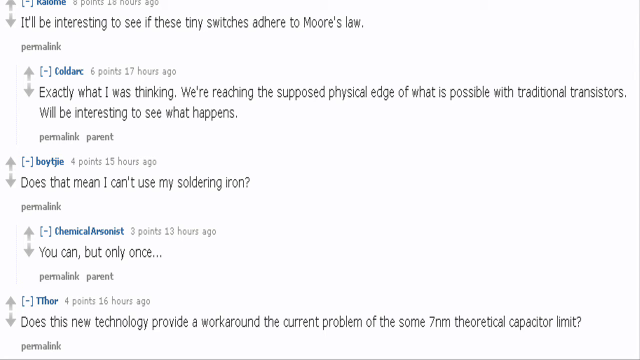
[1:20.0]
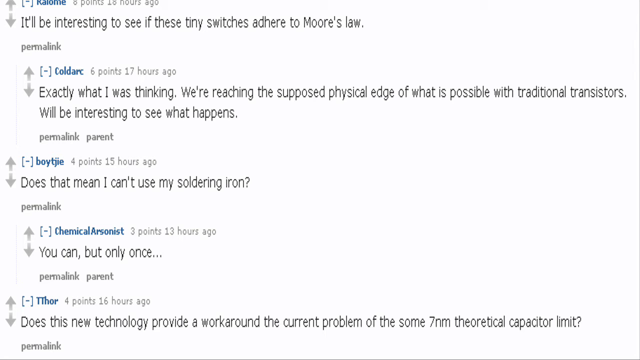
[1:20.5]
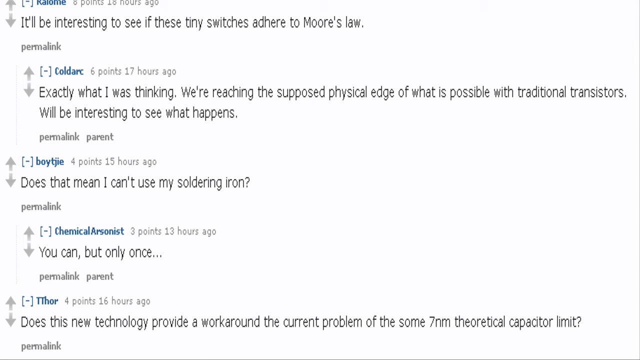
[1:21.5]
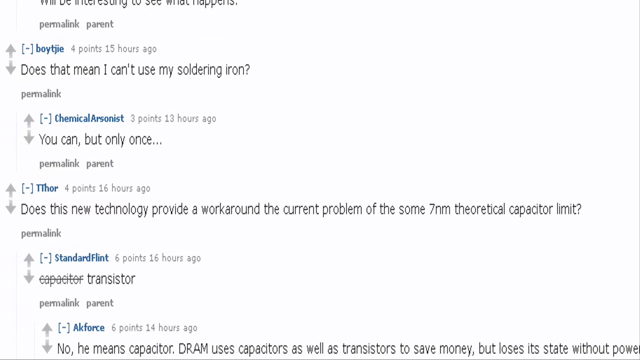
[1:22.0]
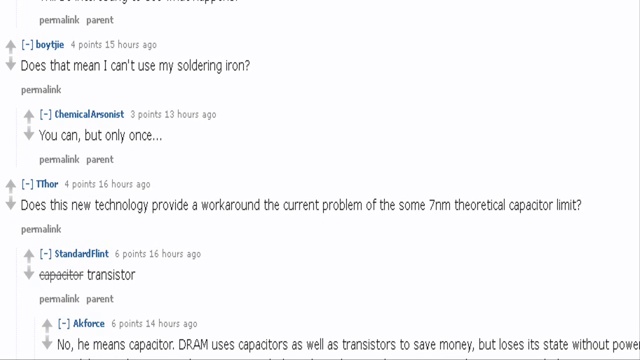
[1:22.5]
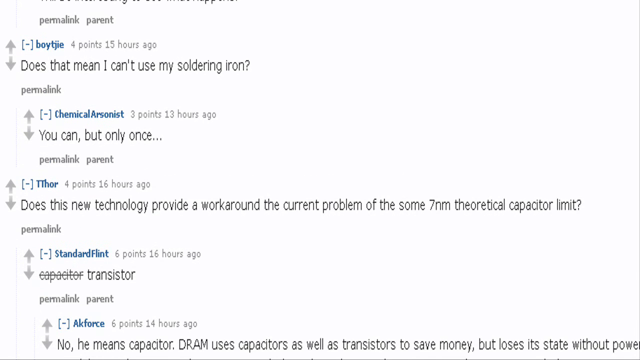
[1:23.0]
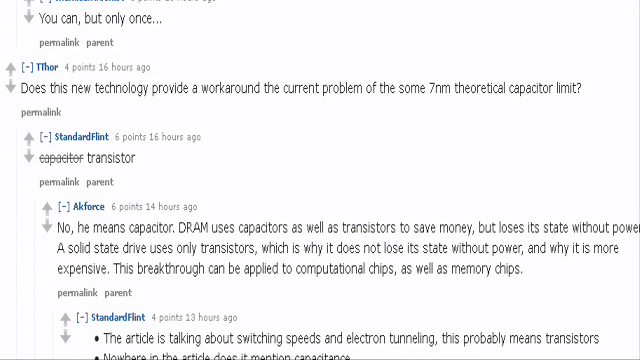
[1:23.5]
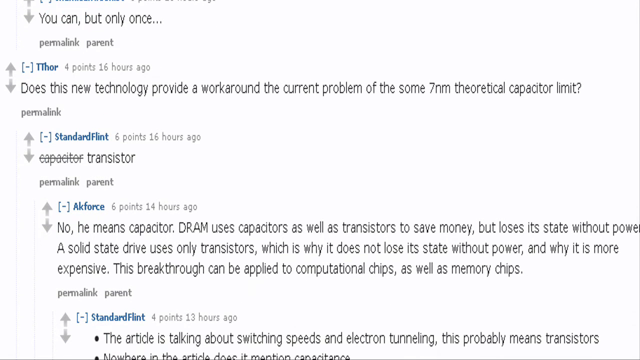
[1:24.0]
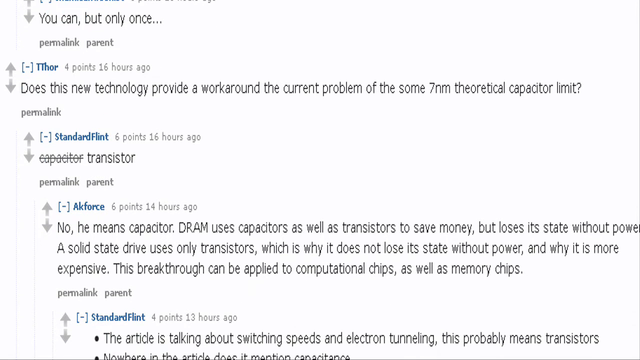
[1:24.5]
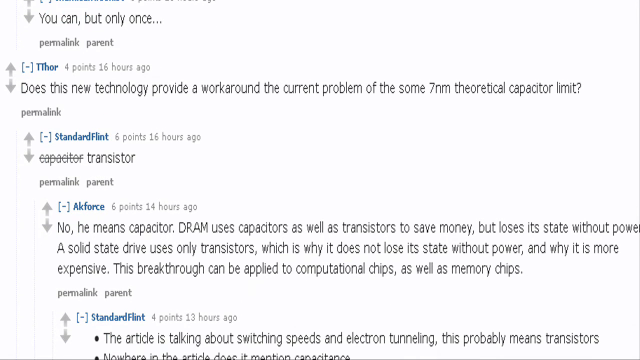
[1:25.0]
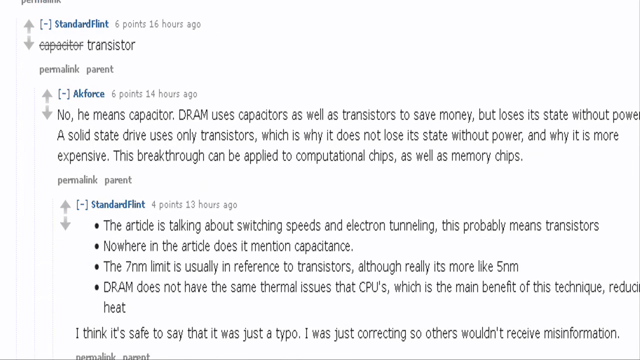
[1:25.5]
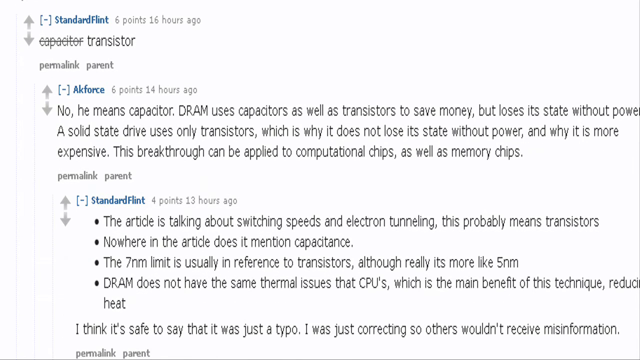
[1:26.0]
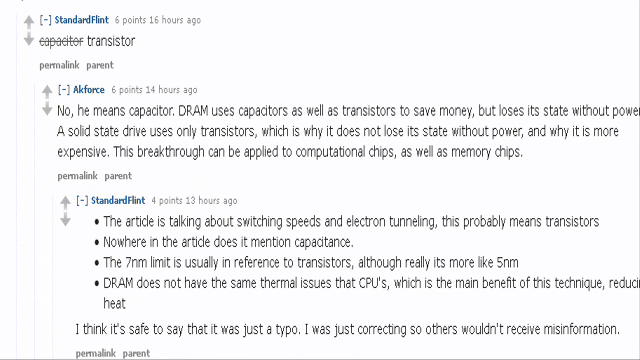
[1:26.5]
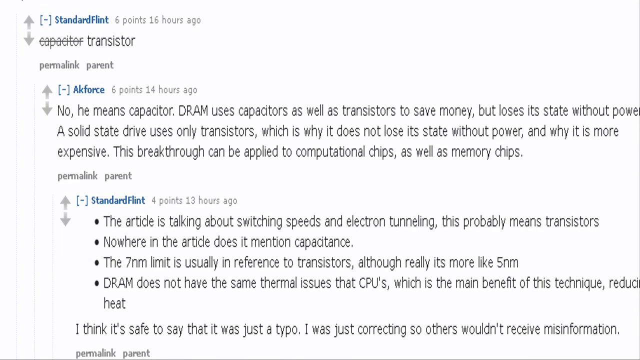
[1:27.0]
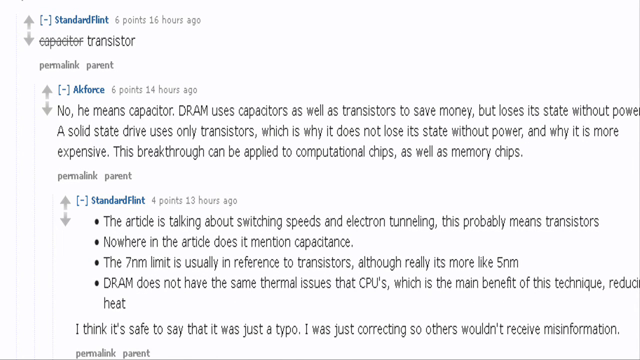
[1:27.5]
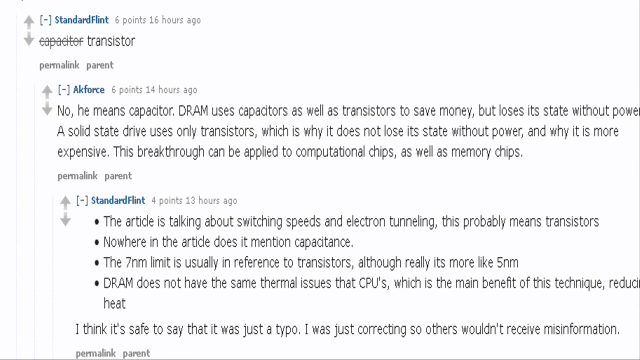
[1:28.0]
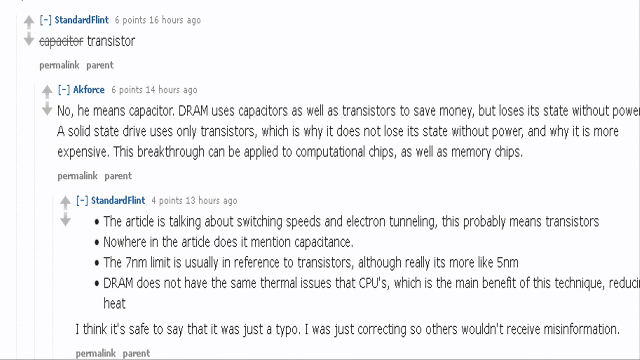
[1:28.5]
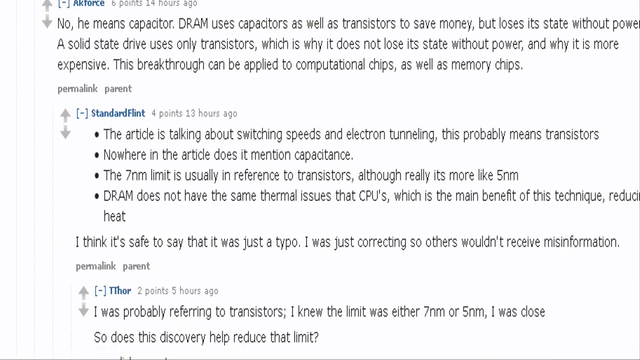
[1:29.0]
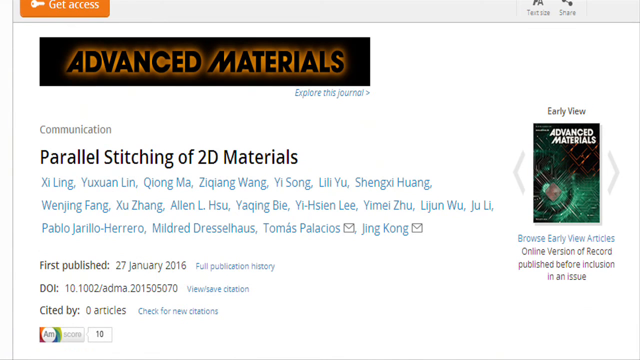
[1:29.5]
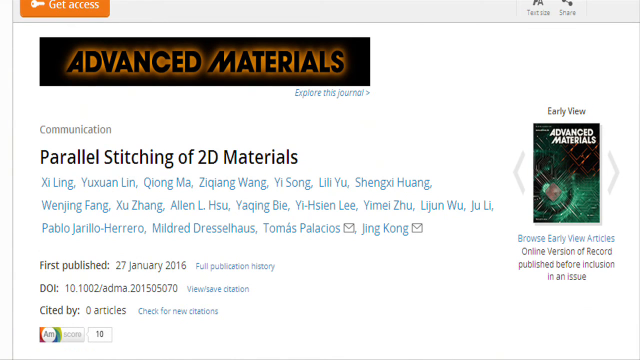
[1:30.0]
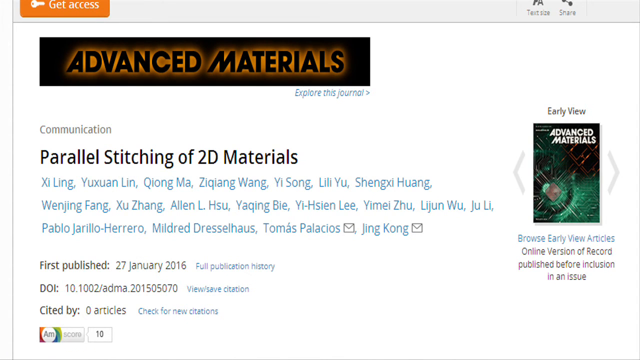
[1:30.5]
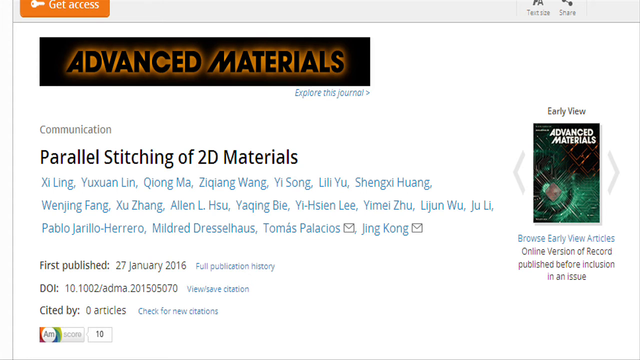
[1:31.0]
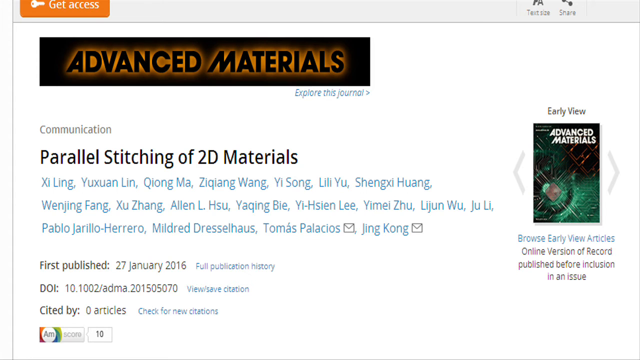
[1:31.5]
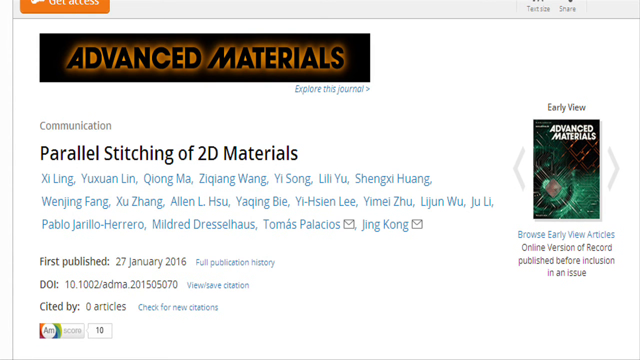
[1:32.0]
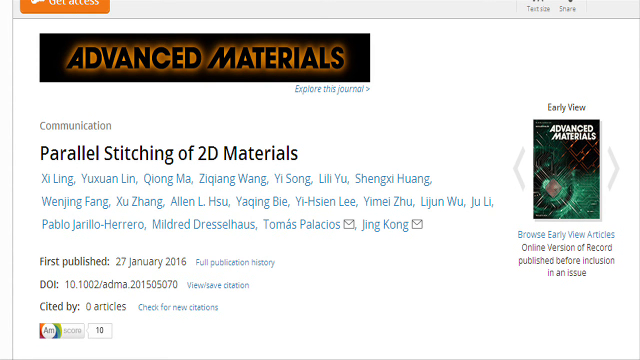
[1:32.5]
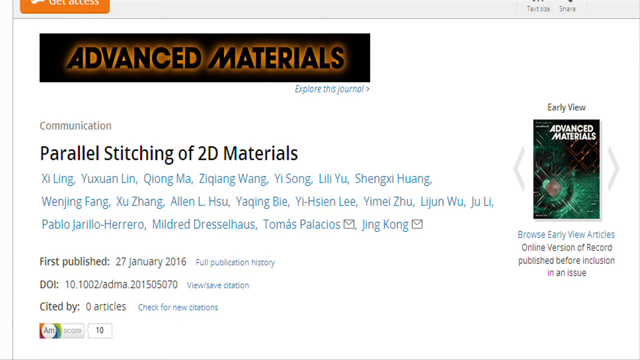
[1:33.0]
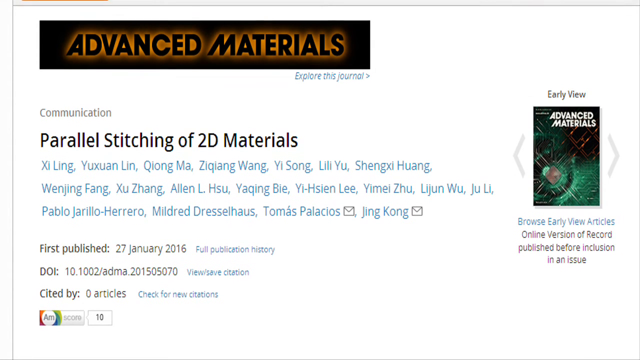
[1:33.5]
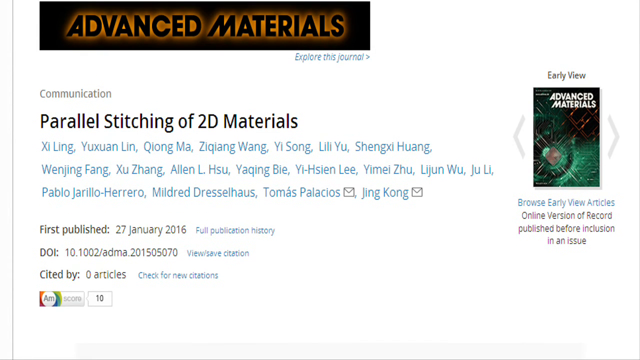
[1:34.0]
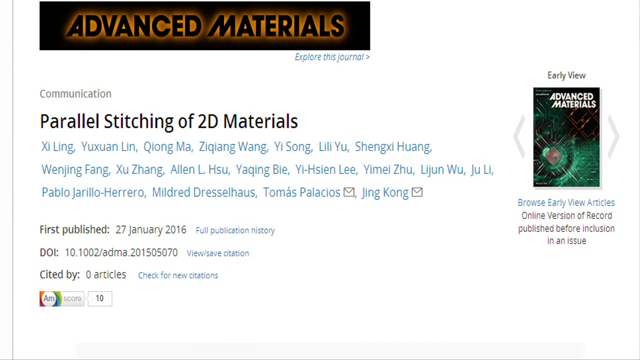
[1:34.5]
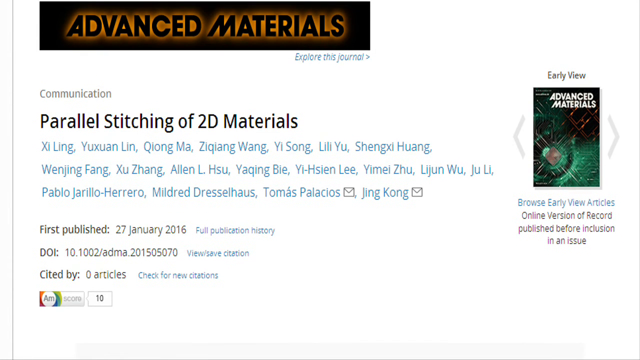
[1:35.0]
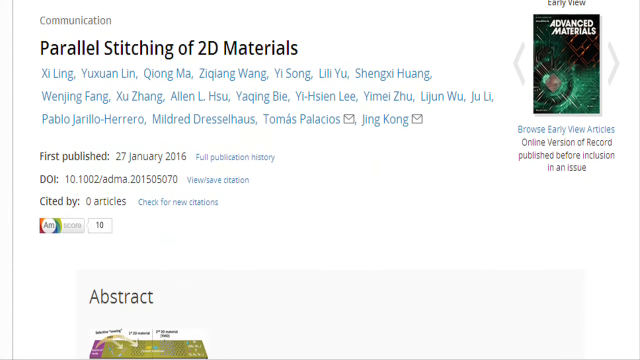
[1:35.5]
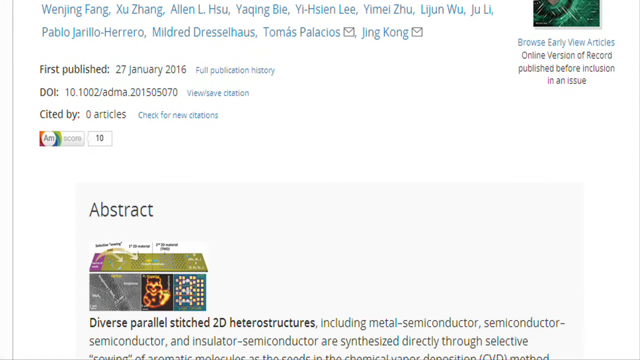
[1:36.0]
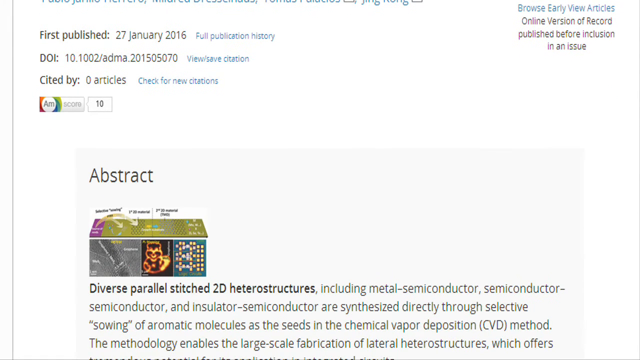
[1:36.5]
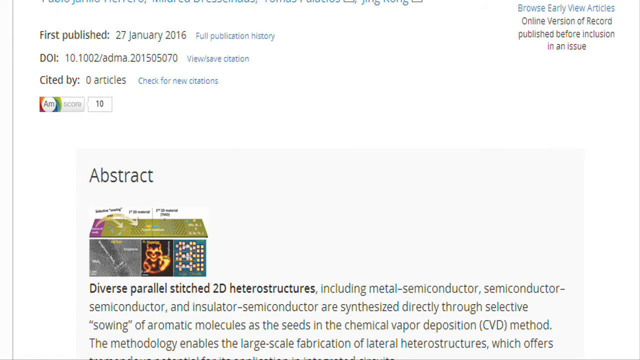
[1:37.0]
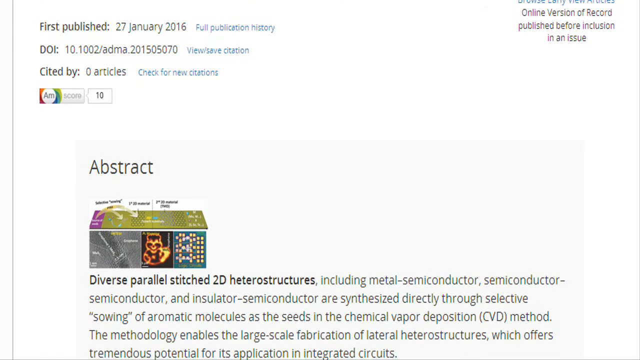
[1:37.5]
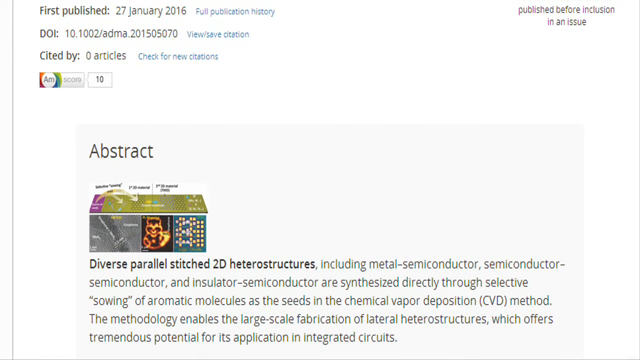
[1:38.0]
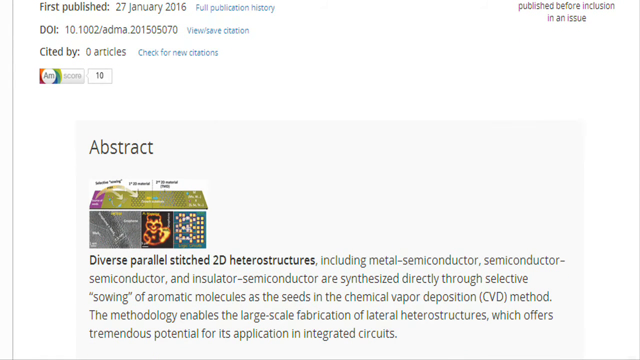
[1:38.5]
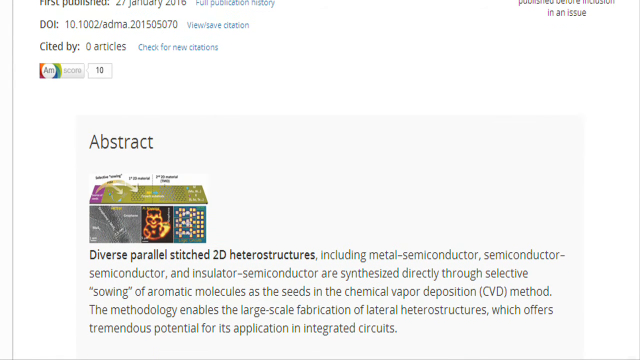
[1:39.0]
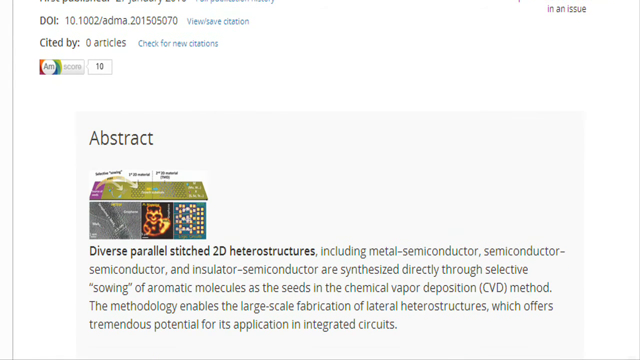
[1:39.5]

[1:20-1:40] The discussion thread continues with more questions, and it starts to get kind of silly and less serious; the discussion mentions Moore's law. The video then goes back to the academic article on 2D stitching, returning to its abstract and scrolling through it. These pages have a white background that fades to a thin black bar at the bottom. The article is scrolled more or less to its end, seemingly trying to get to some point in it.